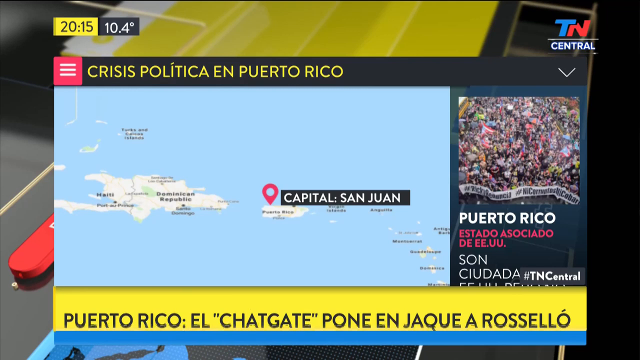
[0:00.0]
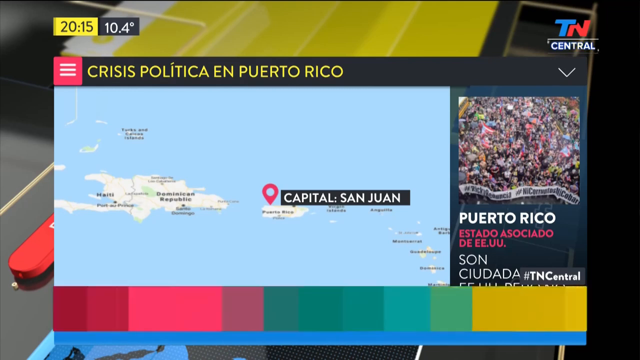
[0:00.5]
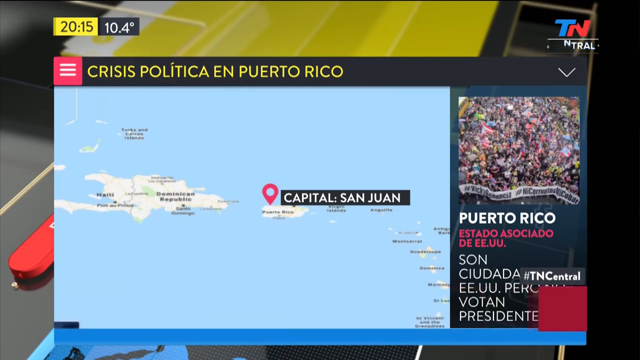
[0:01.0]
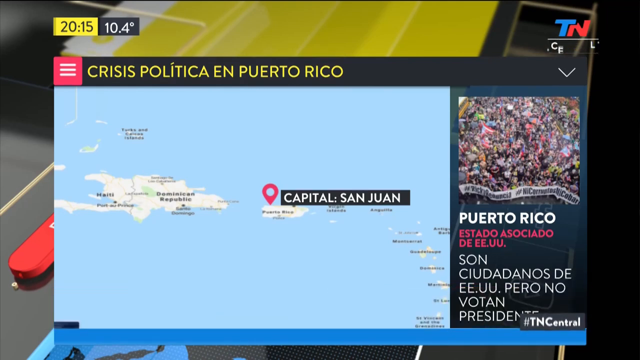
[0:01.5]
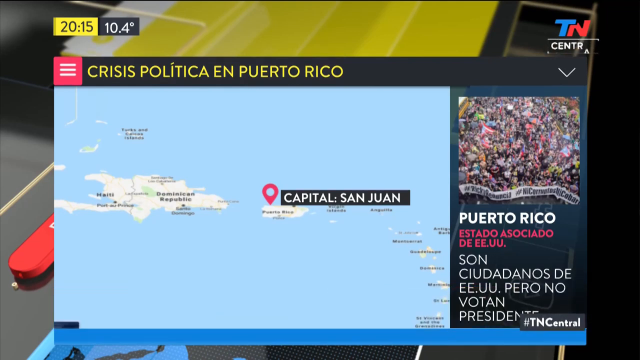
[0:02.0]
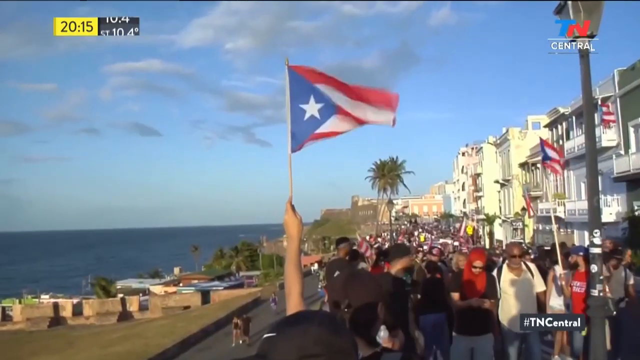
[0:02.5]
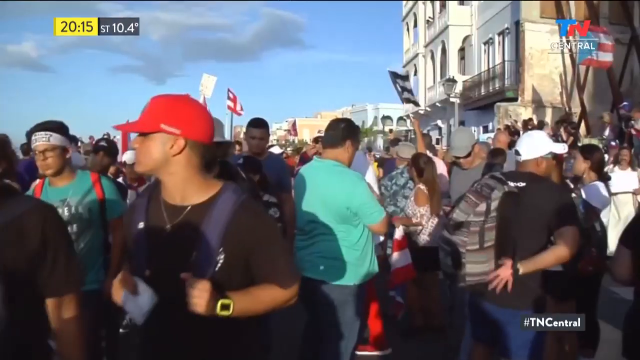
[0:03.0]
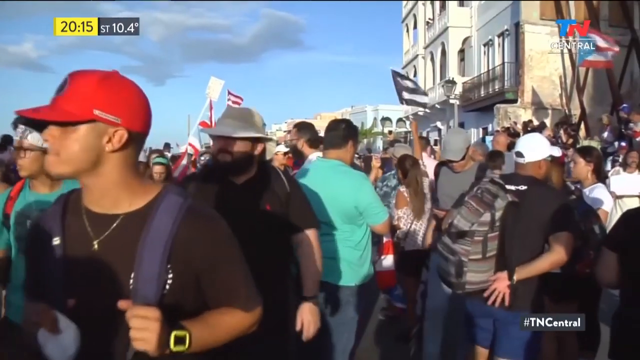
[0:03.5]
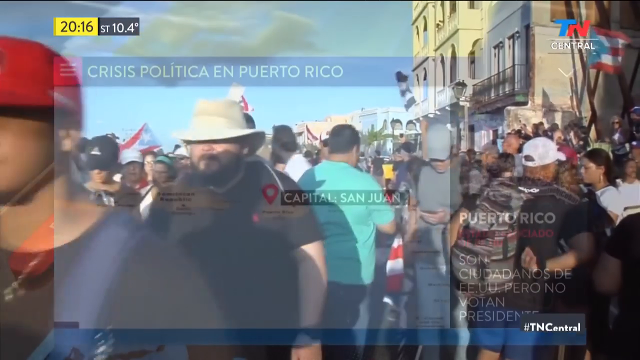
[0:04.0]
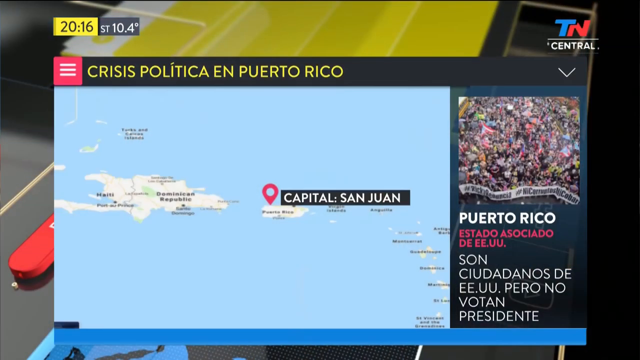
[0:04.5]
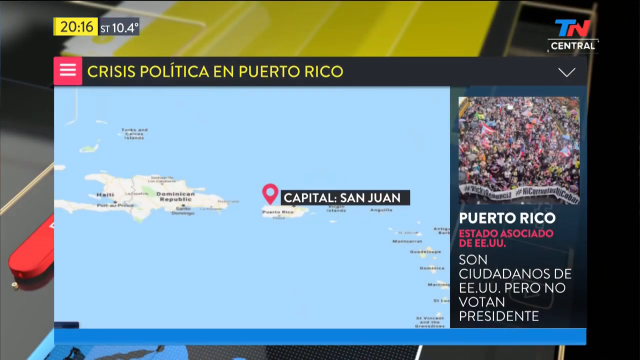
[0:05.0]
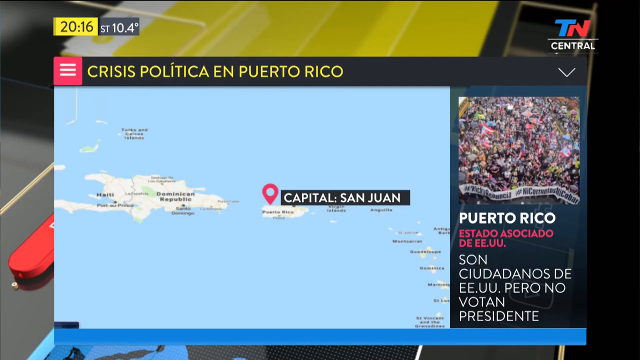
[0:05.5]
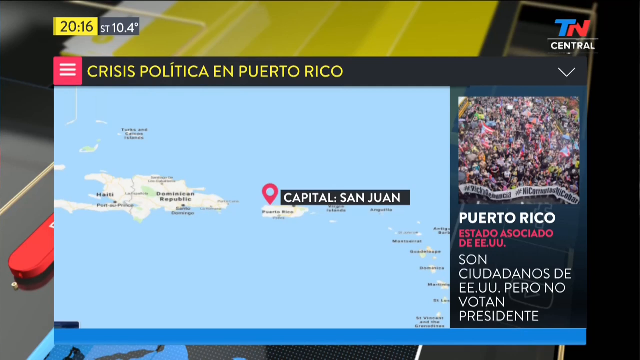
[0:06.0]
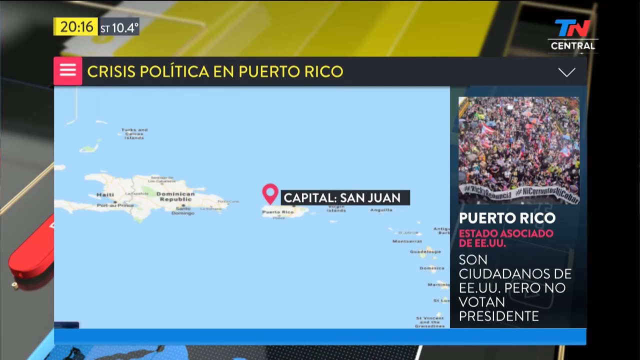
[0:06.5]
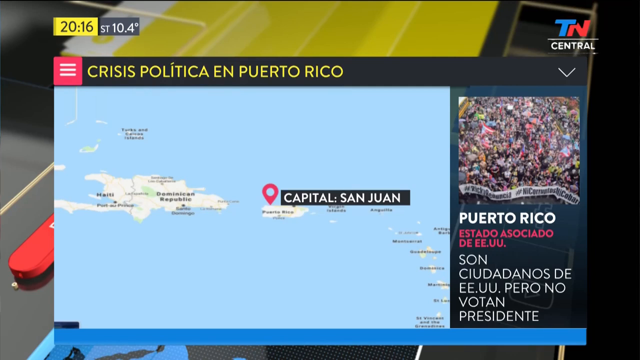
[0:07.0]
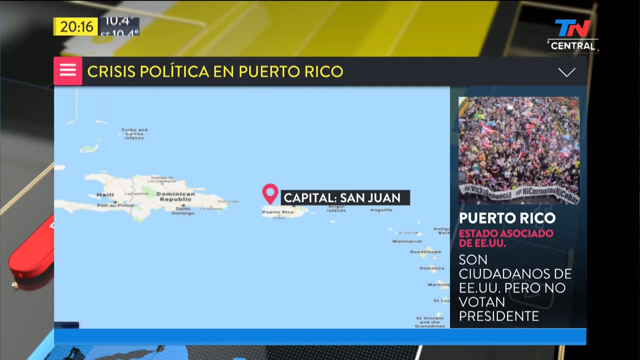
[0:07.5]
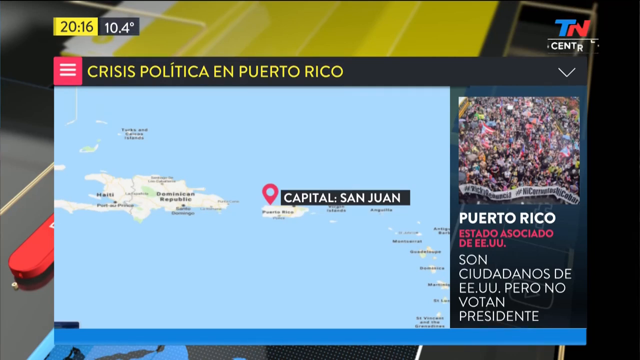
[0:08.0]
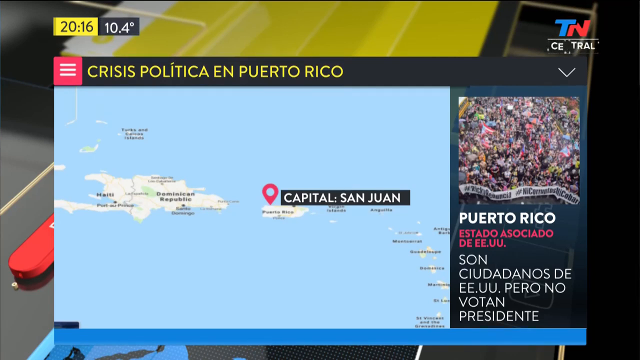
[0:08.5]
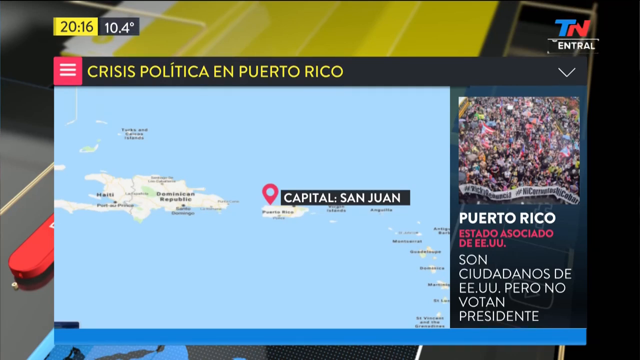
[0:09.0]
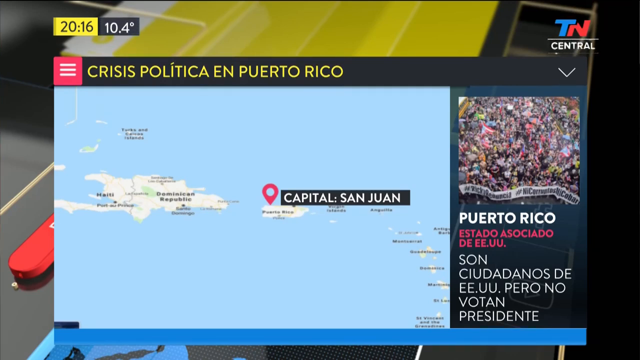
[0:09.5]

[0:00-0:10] The scene is in Puerto Rico. People are on the street raising and waving the Puerto Rican flag up to the sky. Many people are moving around, some wearing bags, while others stand in place. It looks as if it might be a protest.